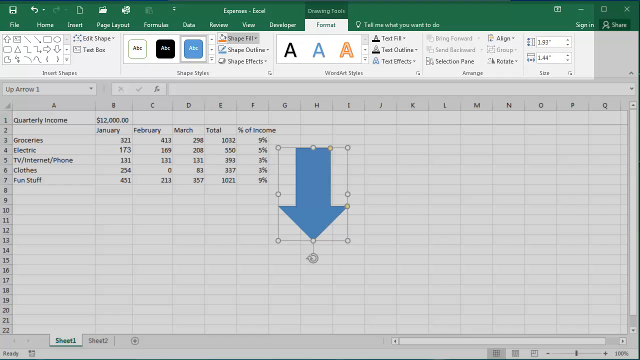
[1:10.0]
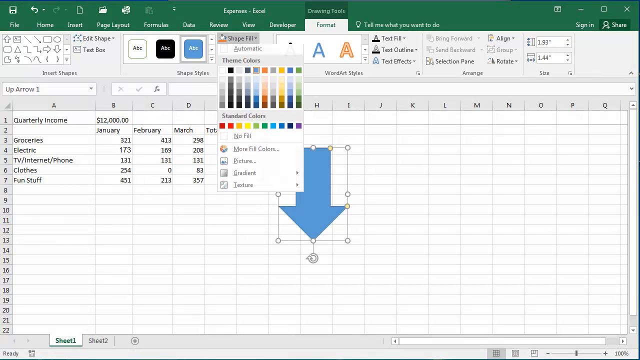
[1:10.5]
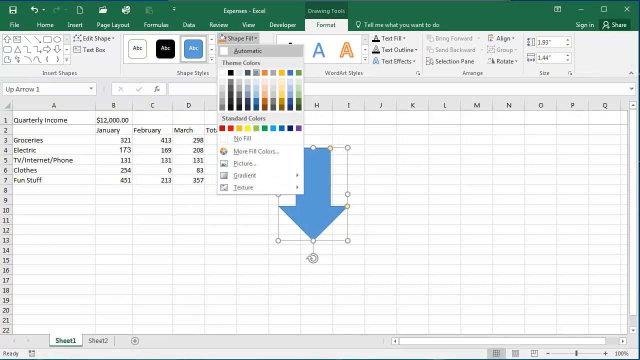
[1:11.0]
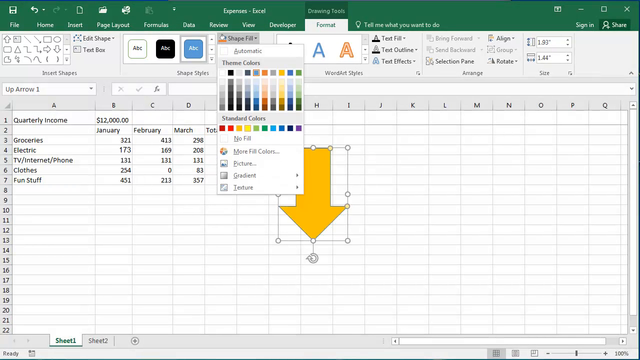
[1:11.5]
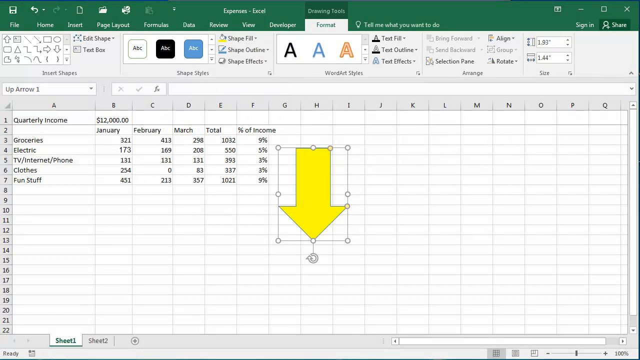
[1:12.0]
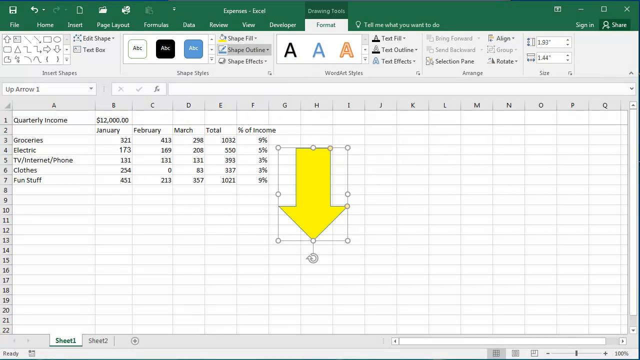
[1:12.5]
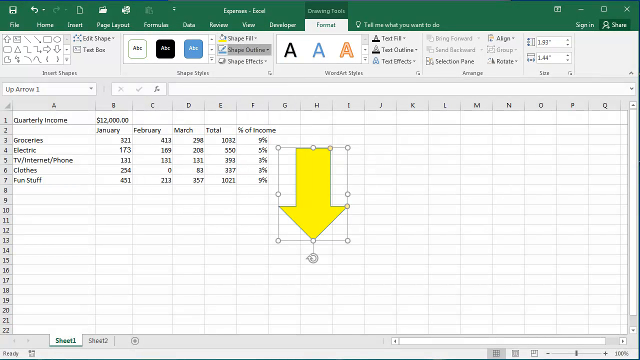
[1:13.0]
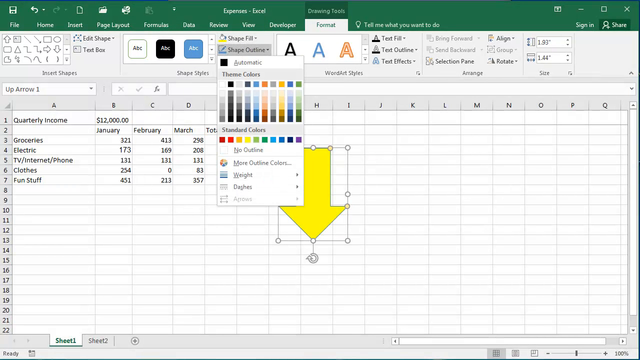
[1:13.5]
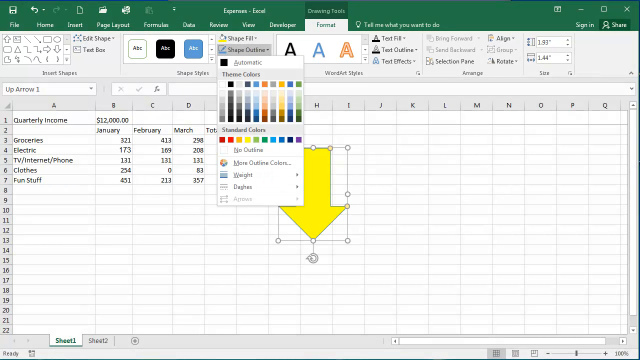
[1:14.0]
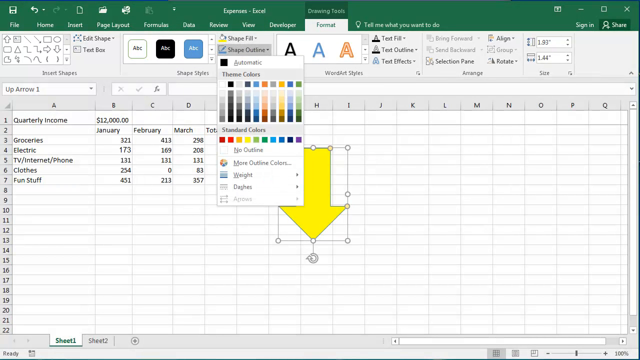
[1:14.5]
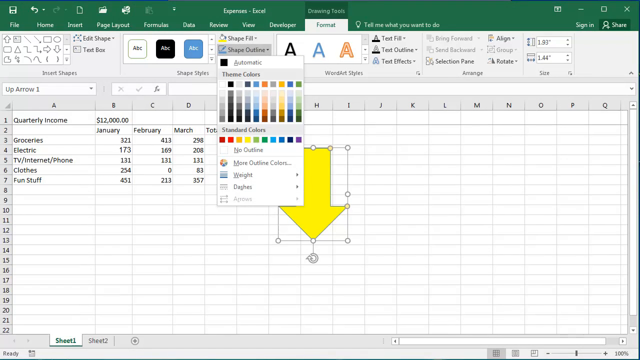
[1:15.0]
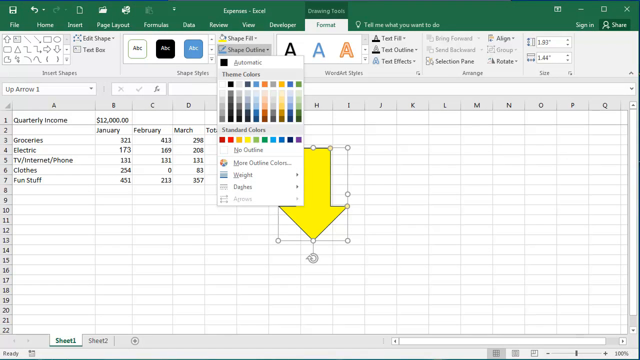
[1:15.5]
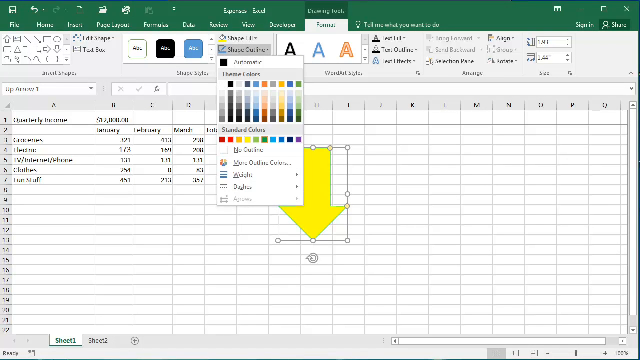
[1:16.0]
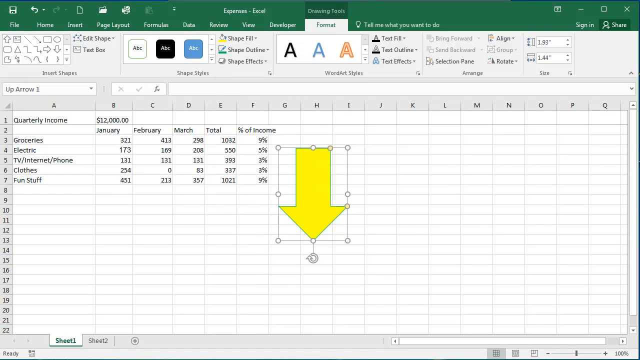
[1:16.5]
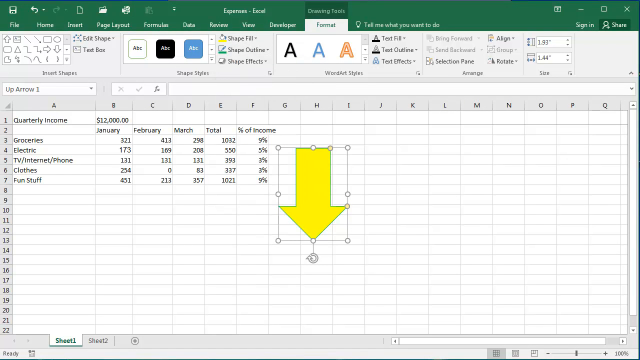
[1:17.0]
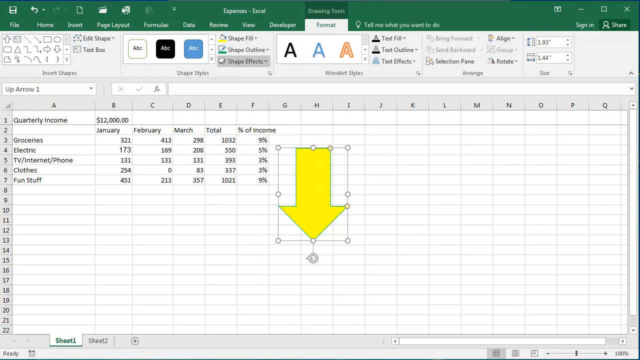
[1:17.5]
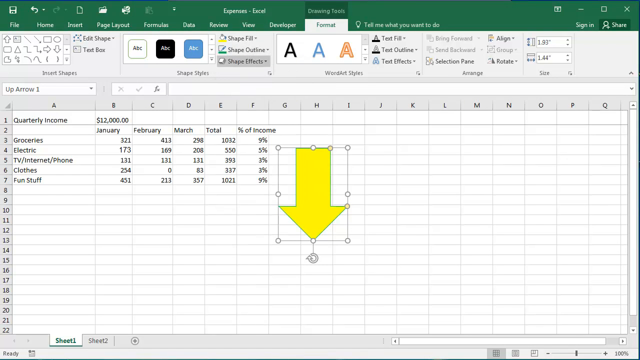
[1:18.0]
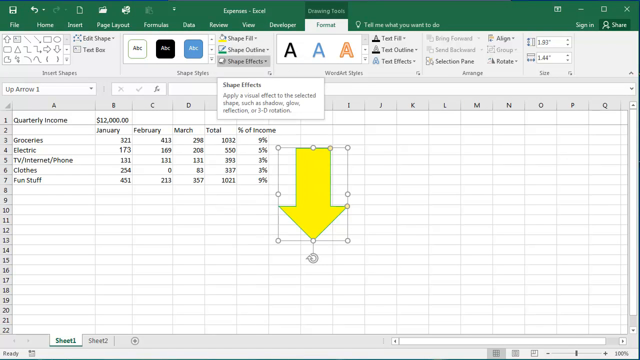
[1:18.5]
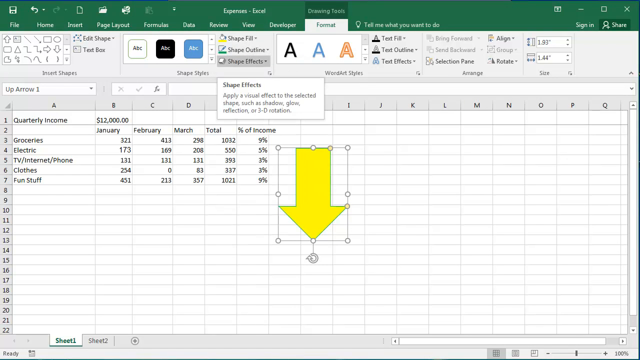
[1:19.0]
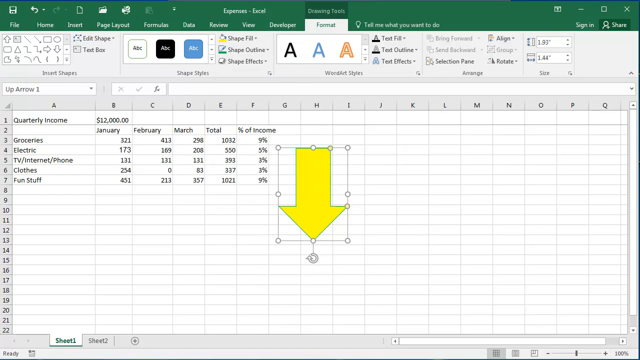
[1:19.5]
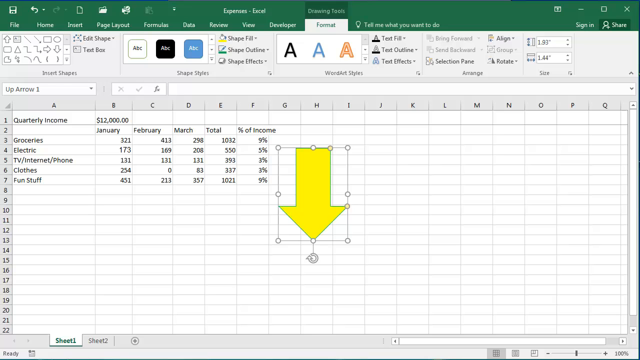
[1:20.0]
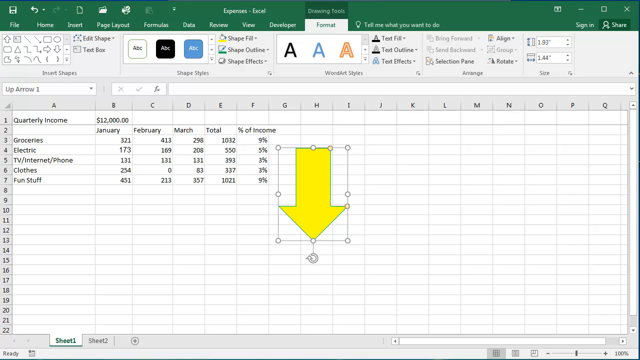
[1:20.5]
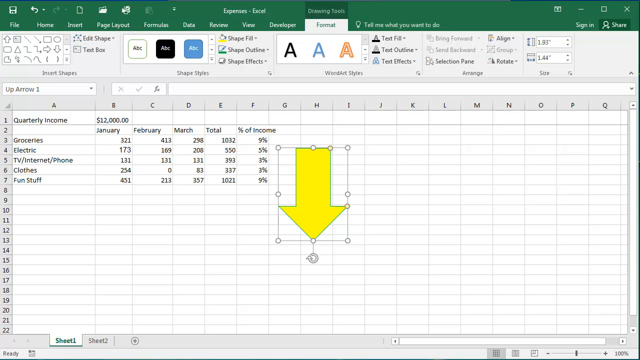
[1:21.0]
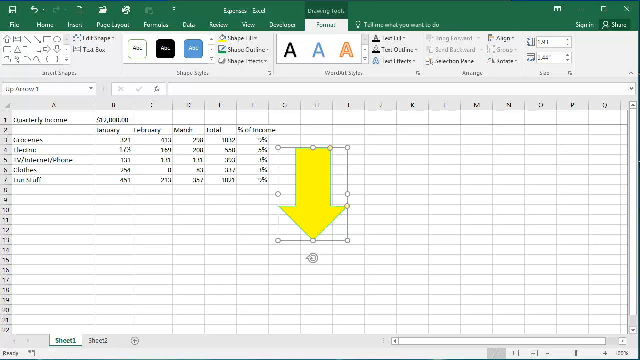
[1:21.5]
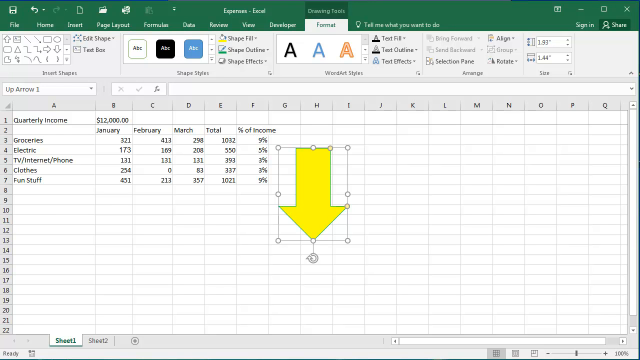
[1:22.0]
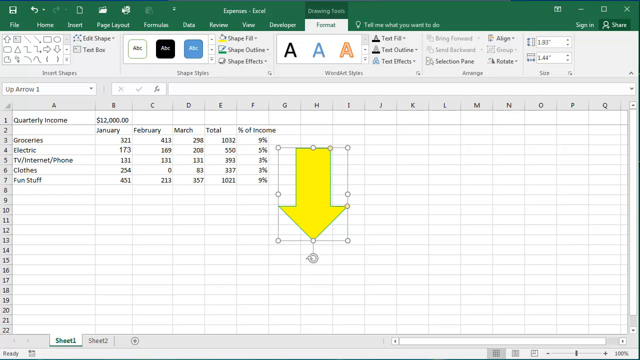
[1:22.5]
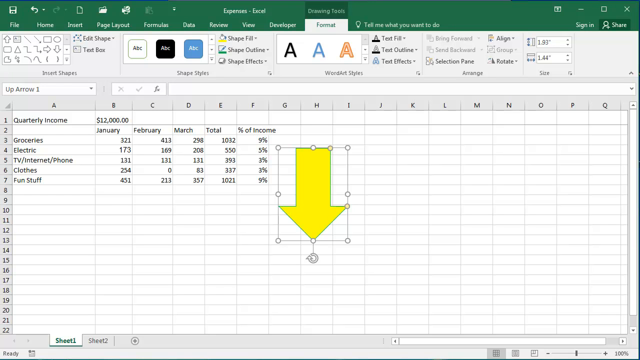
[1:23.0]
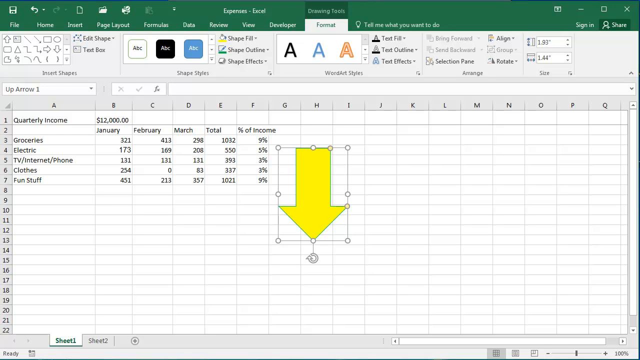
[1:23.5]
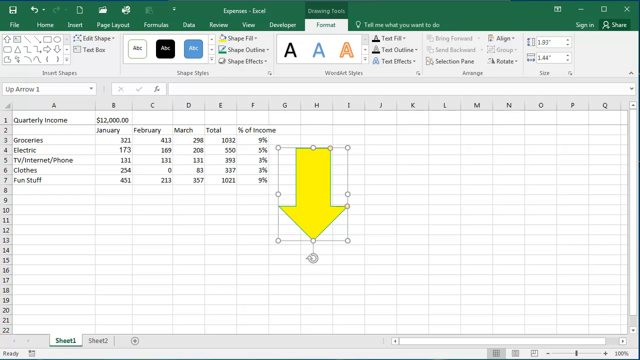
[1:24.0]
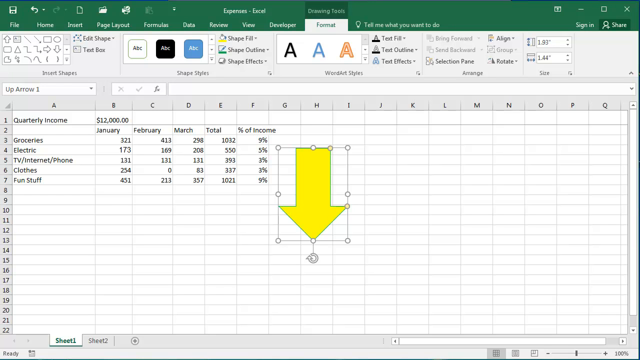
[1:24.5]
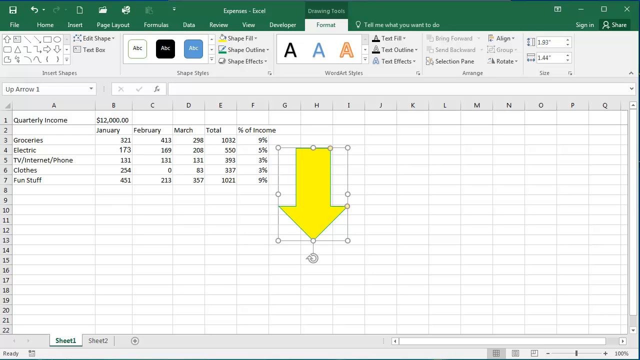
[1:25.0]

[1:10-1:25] Excel is open, and in the middle of the spreadsheet is a giant blue arrow pointing down. It has a transformation box around it showing the arrow can be manipulated, and at the very bottom is a rotation circle arrow that can be grabbed to rotate it. The spreadsheet shows column A with "quarterly income," "groceries," "electric," "TV, internet, and phone," "clothes" and "fun stuff"; column B with $12,000, "January," 321, 173, 131, 254 and 451; column C with "February," 413, 169, 131, 0 and 213; column D with "March," 298, 208, 131, 83 and 357; column E with "total," 1032, 553, 393, 337 and 1021; and column F with "percent of income," 9%, 5%, 3%, 3% and 9%. Excel menu items run across the top. Someone chooses the shape fill option, and a drop-down menu appears with lots of gradients of different colors, labeled "theme colors" at the top and "standard colors" underneath. The person chooses yellow, and the down-pointing arrow turns yellow. They then choose shape outline, and a drop-down with many theme colors and standard colors appears; they click on something. Then they click shape effects, and a drop-down menu for shape effects appears and then disappears.